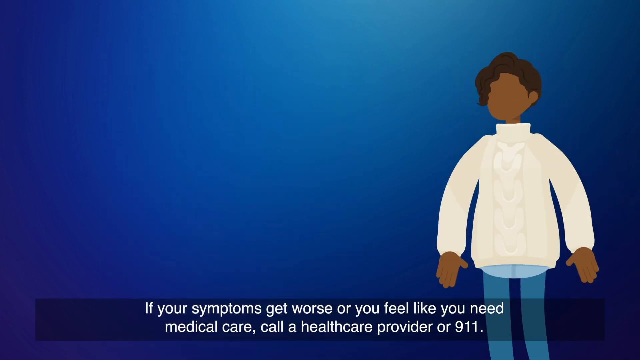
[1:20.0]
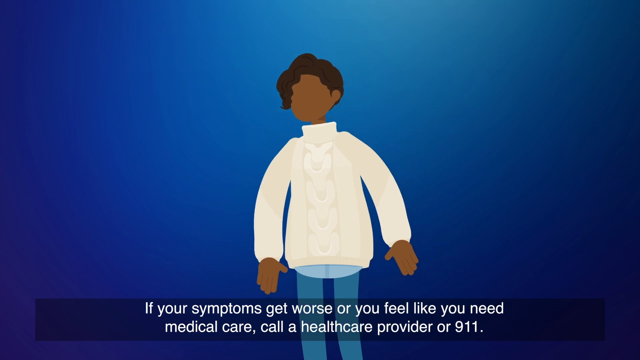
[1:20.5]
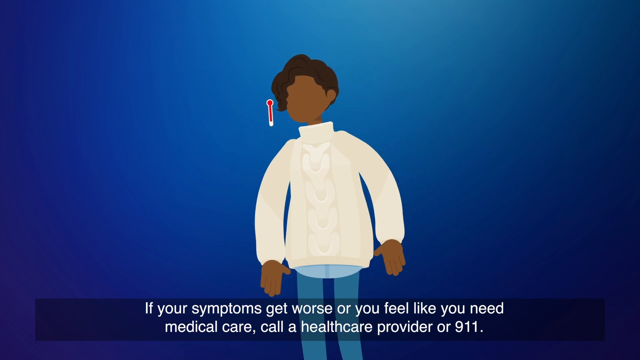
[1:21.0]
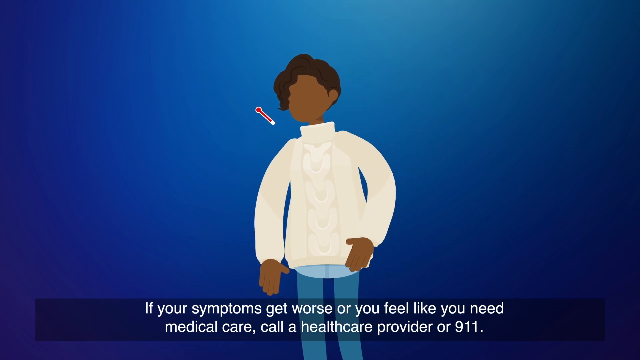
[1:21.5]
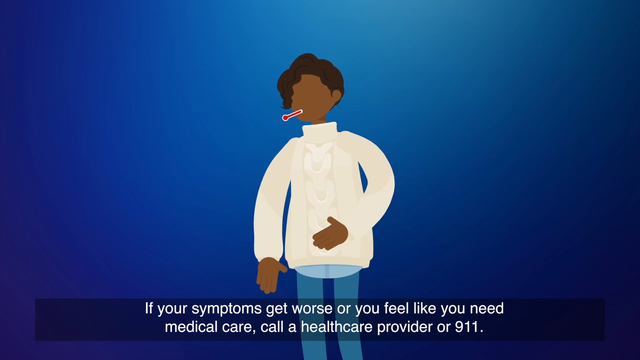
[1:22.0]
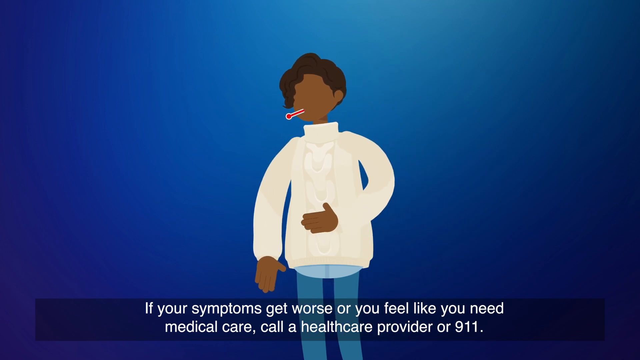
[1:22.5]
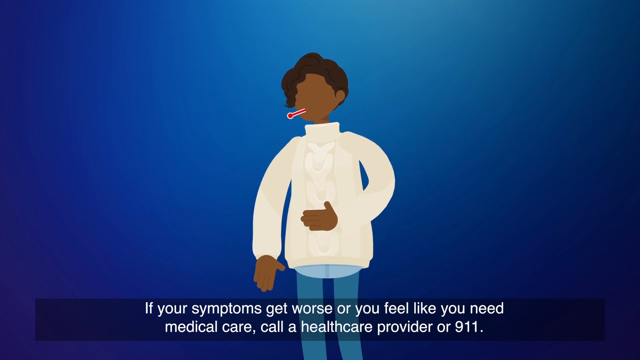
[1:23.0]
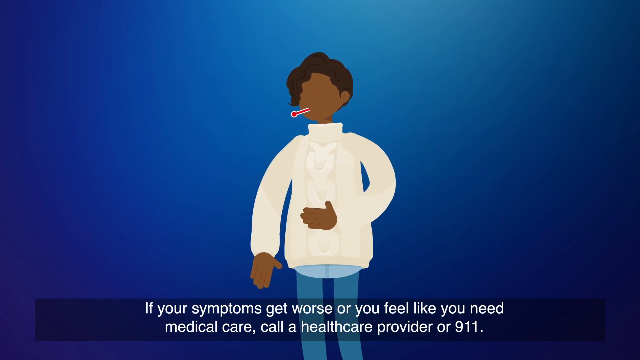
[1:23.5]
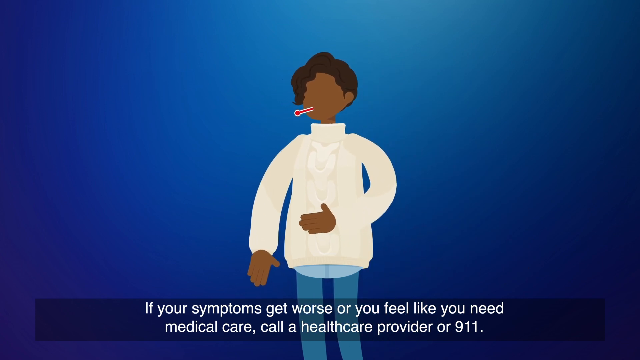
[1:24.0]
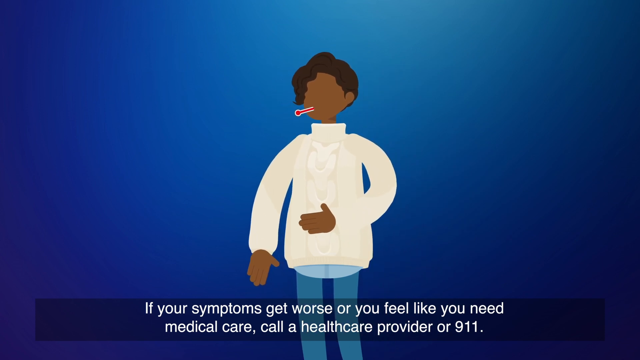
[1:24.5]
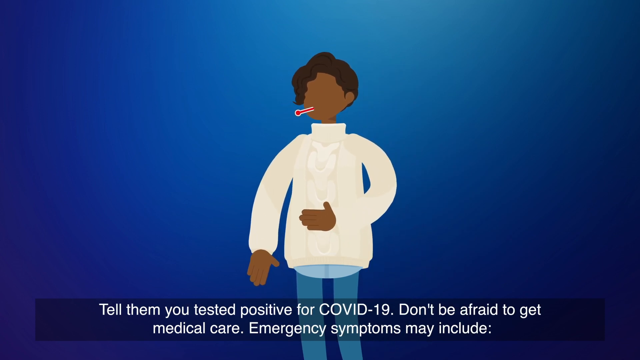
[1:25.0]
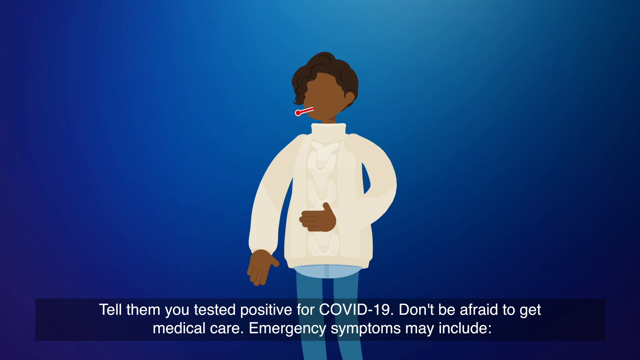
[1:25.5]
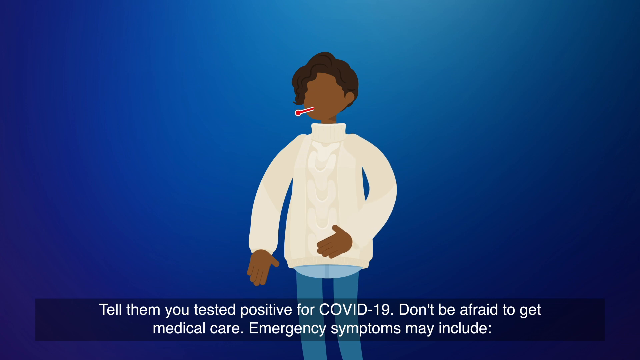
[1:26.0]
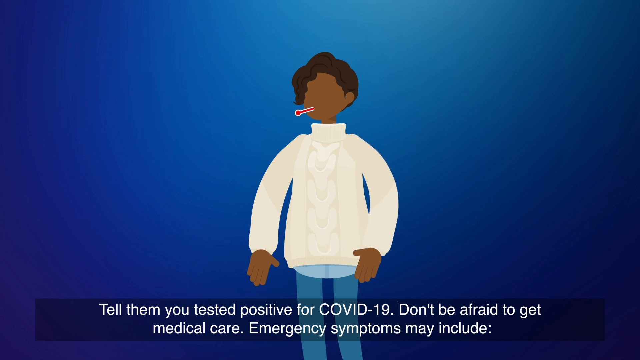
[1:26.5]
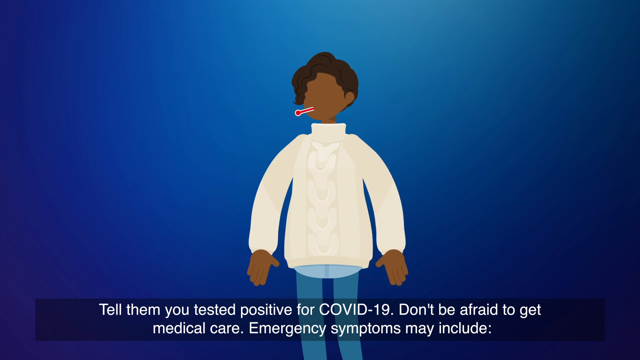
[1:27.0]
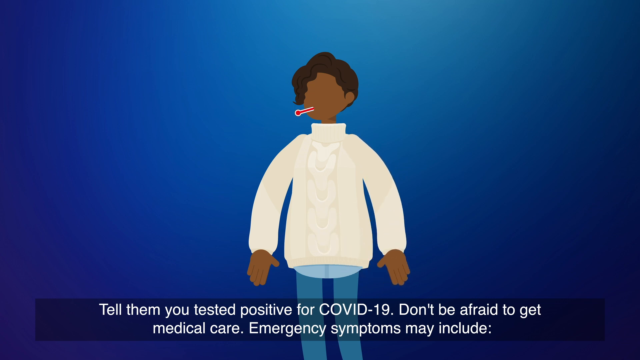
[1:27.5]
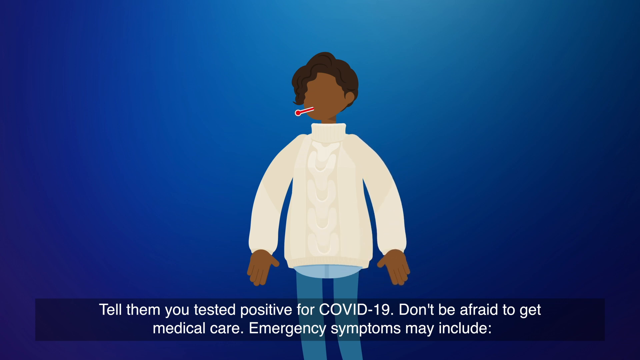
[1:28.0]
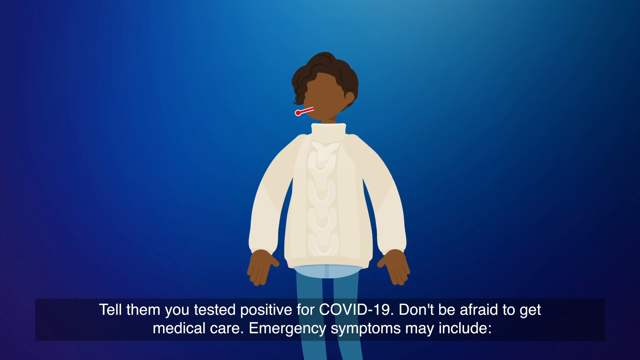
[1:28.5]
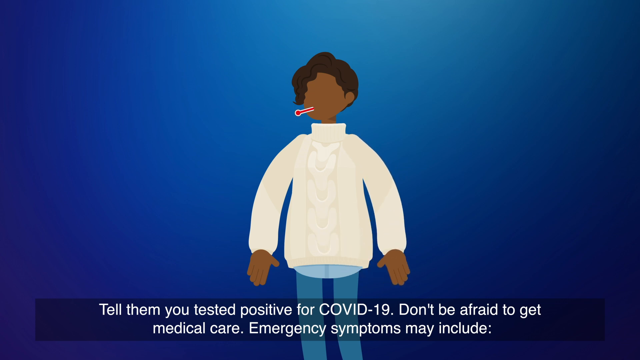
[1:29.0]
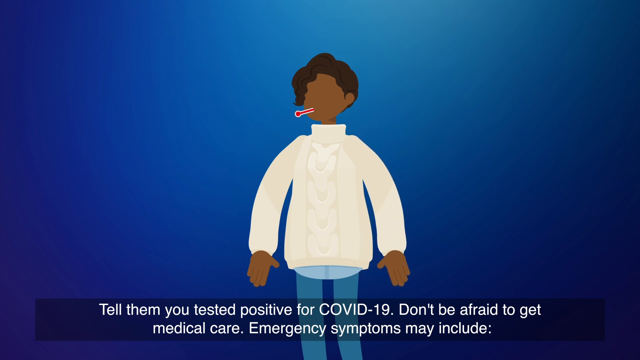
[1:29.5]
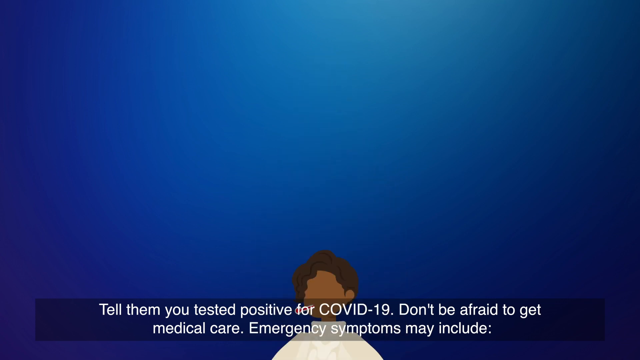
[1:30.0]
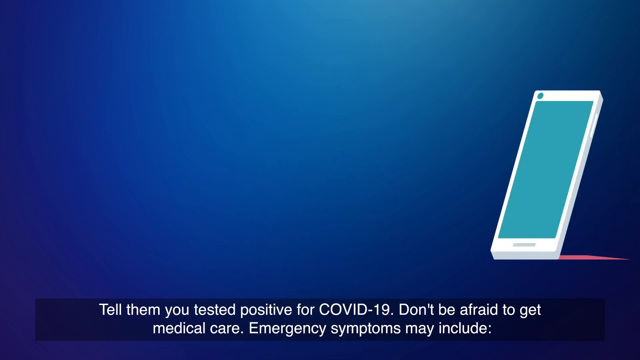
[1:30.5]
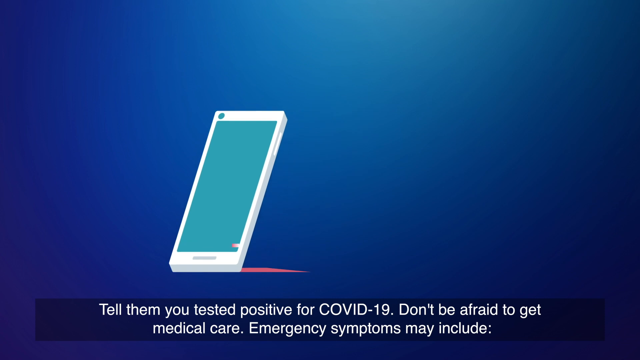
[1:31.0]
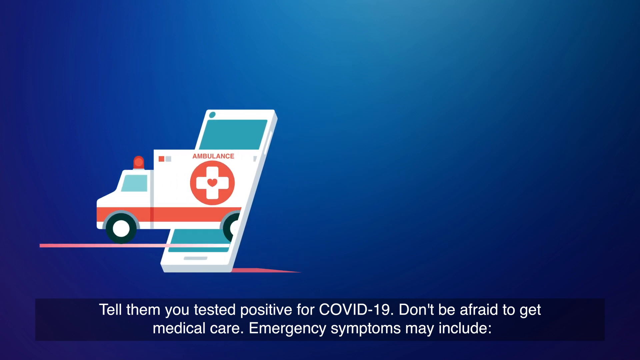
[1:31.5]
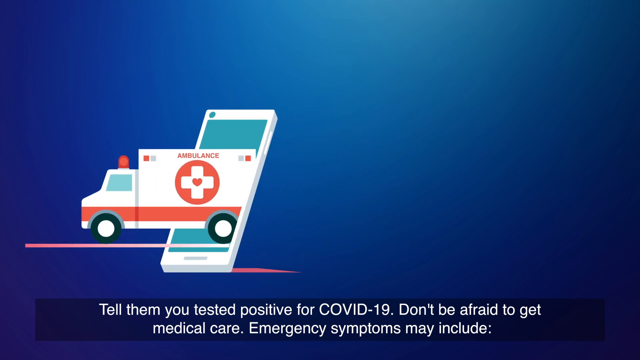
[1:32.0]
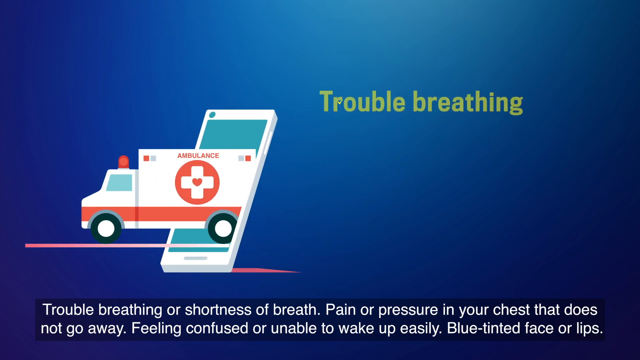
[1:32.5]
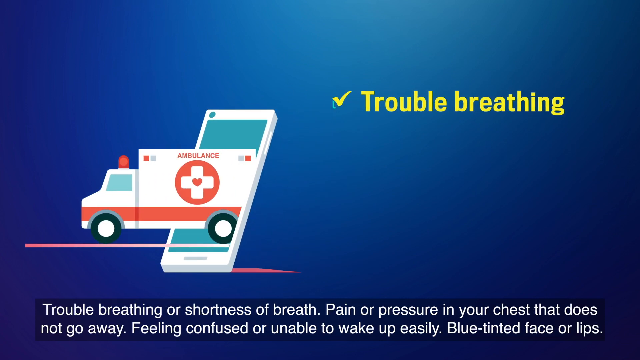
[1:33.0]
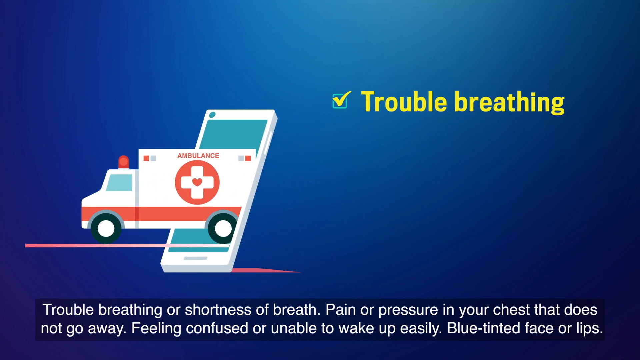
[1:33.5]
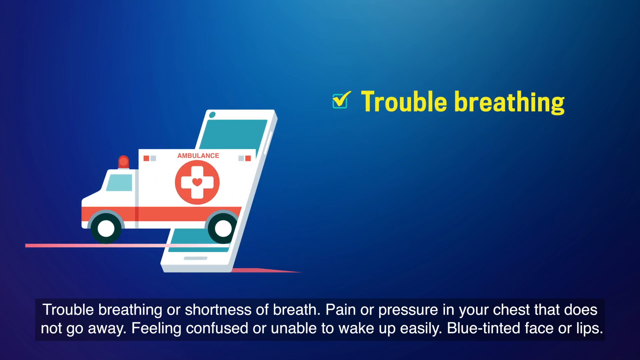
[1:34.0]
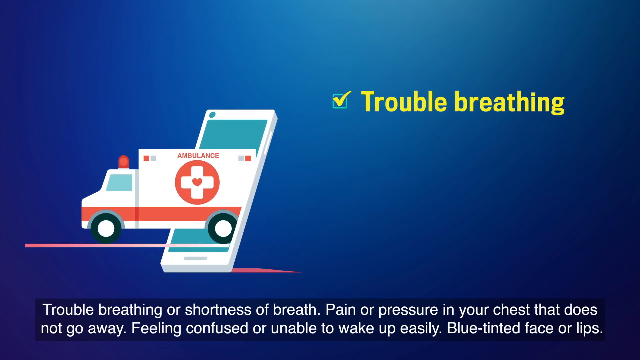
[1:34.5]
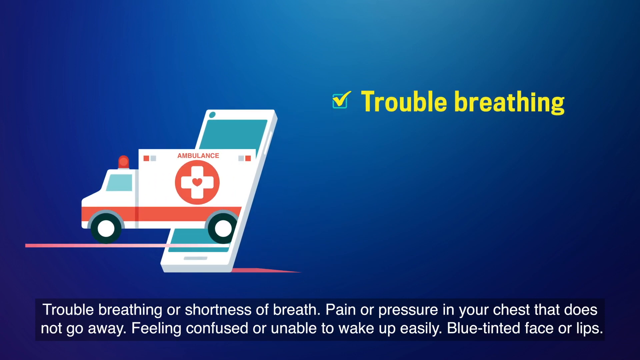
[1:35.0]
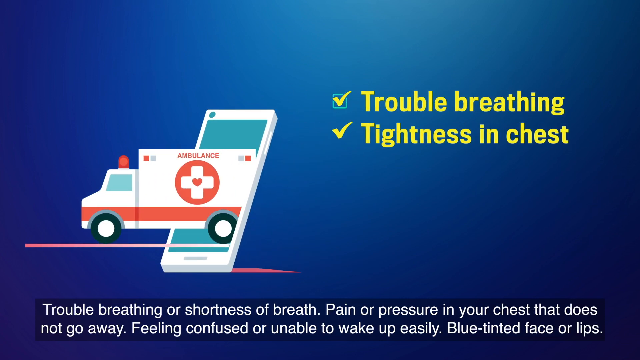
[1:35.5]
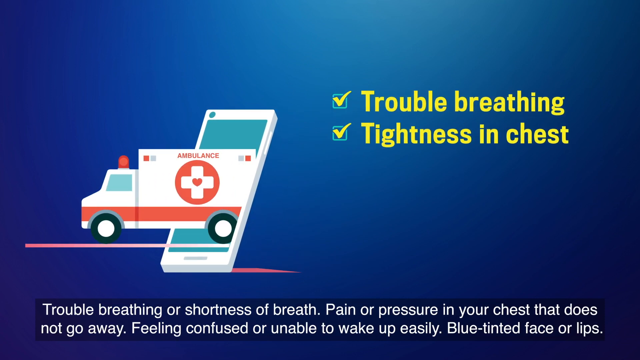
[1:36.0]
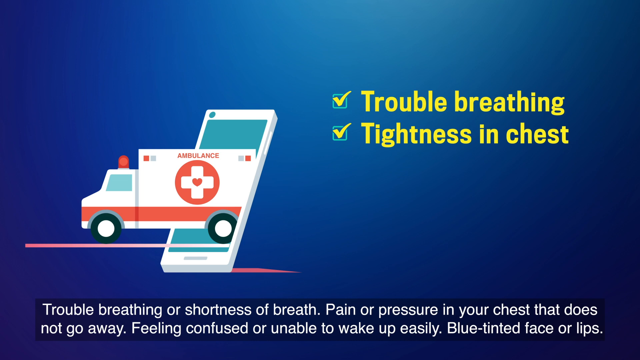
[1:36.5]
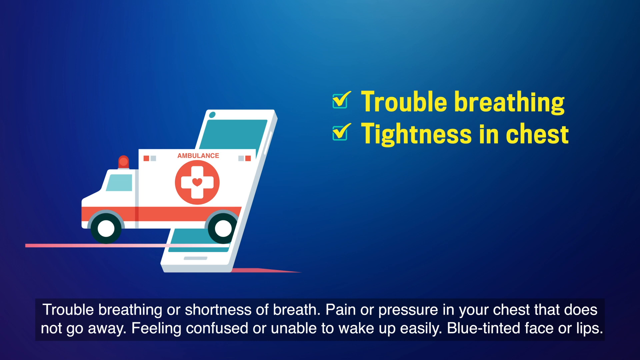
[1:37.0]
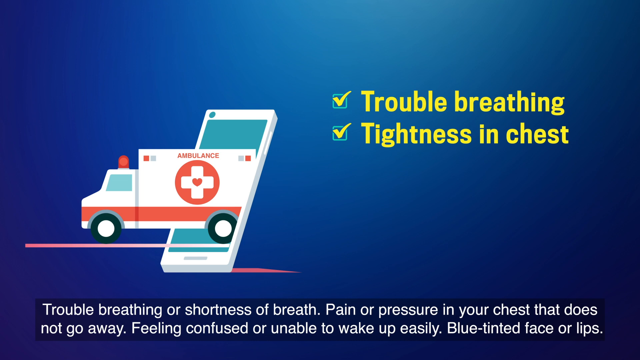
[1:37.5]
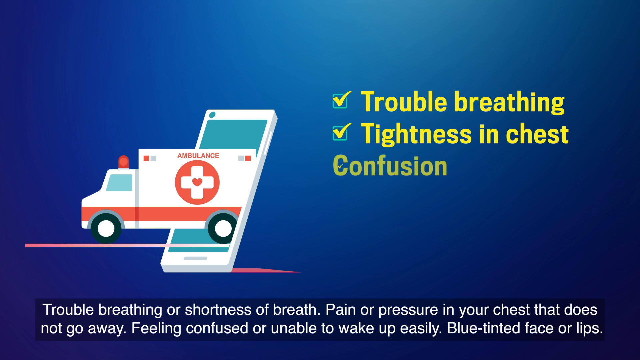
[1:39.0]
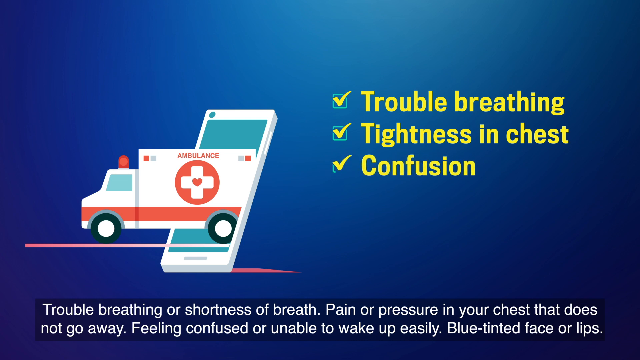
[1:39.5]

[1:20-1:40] On a blue background, a drawing of a woman appears on the right side of the screen. She has brown skin and short brown hair and wears a white sweater and blue pants. White letters at the bottom of the screen read "if your symptoms get worse or you feel like you need medical care call a health care provider or a 9-1-1". The woman moves towards the middle of the screen. On the left side, a white and red thermometer appears and goes into her mouth. She starts rubbing her tummy with her left hand while her right hand stays at her right side. She then moves to the bottom of the screen and disappears. A cell phone appears, with a white outline and a blue screen, and an ambulance drives out of it towards the left side of the screen. The ambulance has a red circle with a white cross on its side, and the word "ambulance" is written on its side in red letters. To the right, the words "trouble breathing" appear in yellow letters, with a blue box containing a yellow check mark to their left. "Tightness in chest" appears with another box with a check mark, and "confusion" appears with another box that has a check mark.